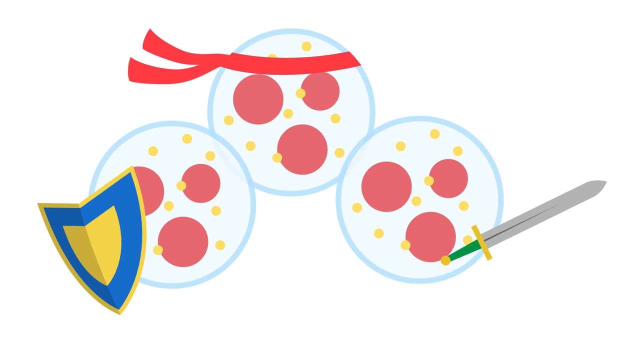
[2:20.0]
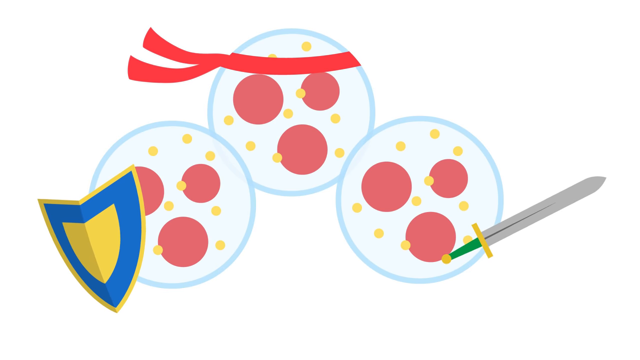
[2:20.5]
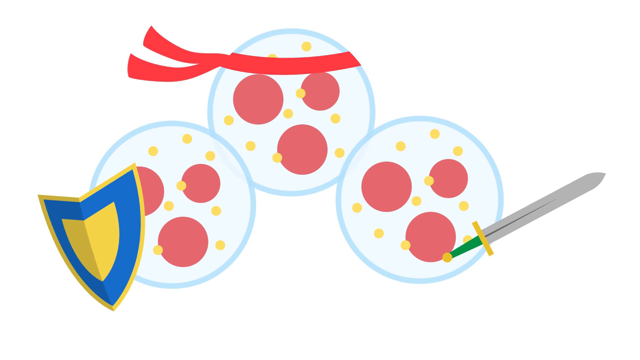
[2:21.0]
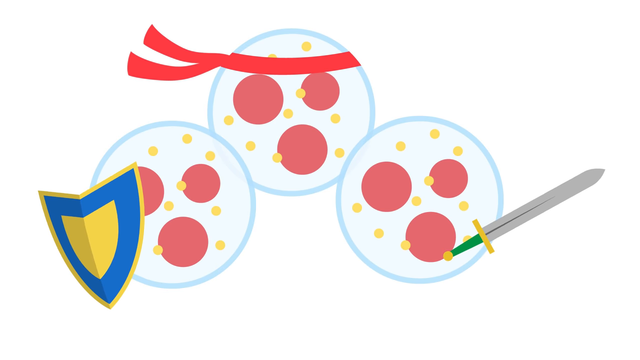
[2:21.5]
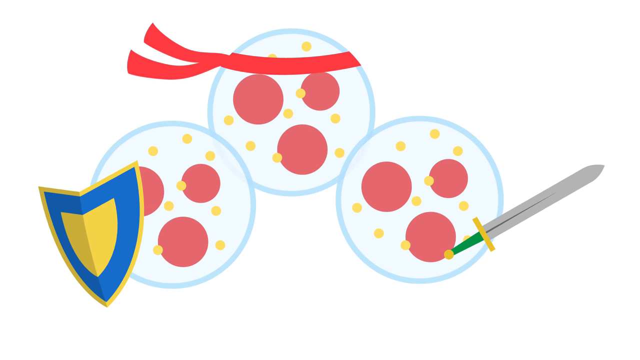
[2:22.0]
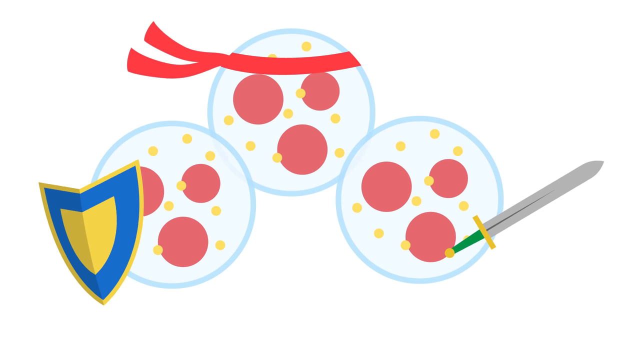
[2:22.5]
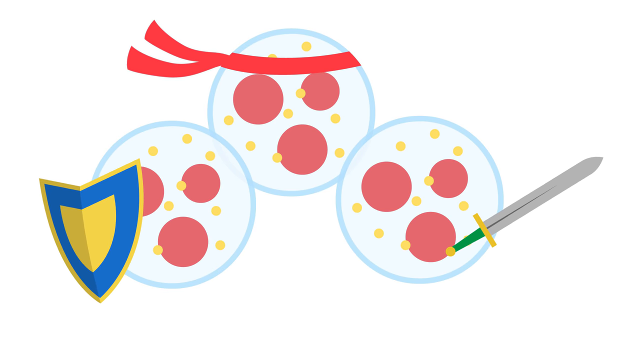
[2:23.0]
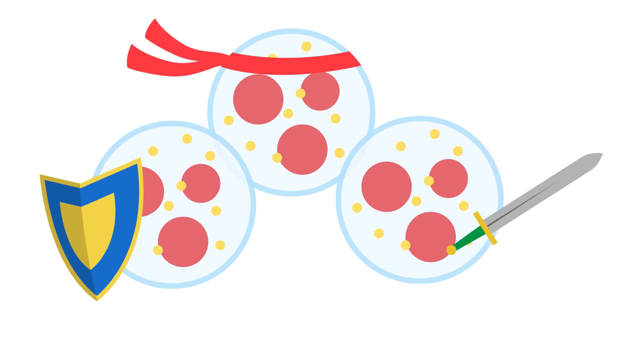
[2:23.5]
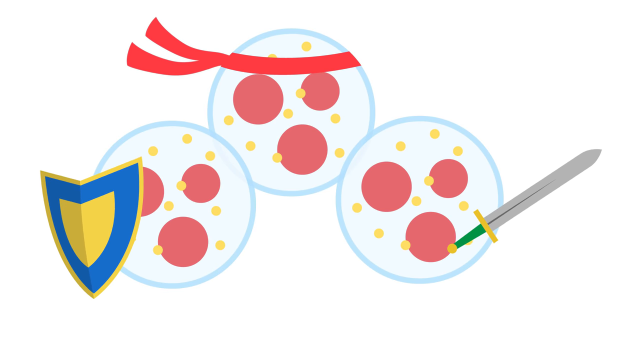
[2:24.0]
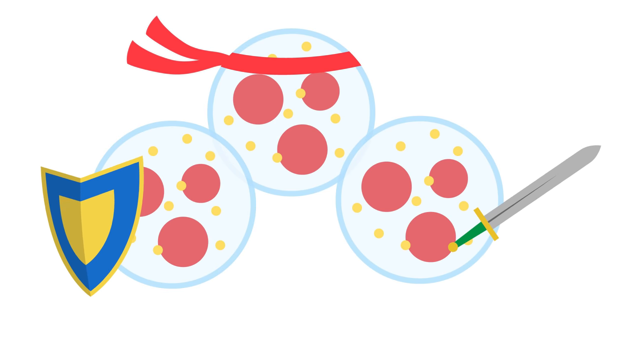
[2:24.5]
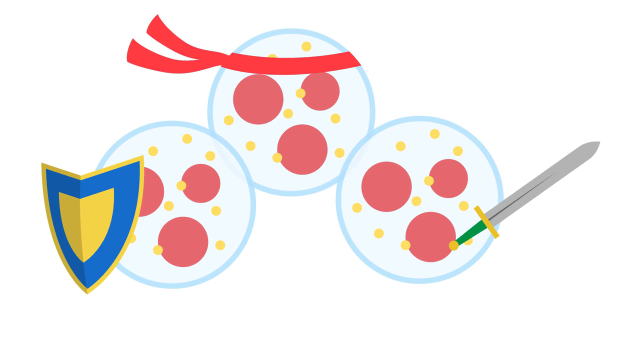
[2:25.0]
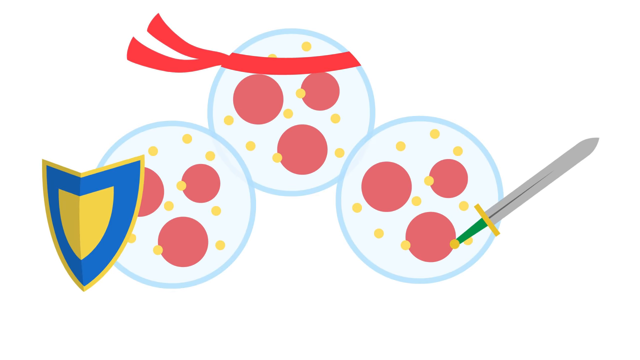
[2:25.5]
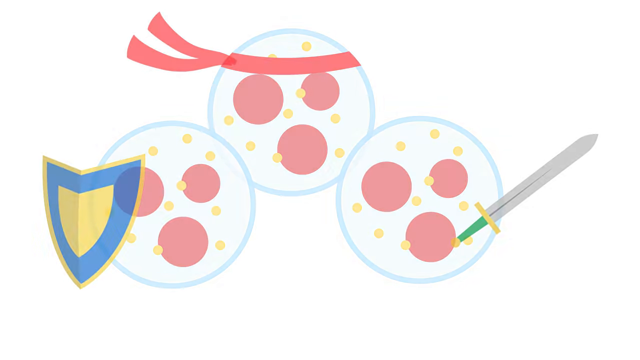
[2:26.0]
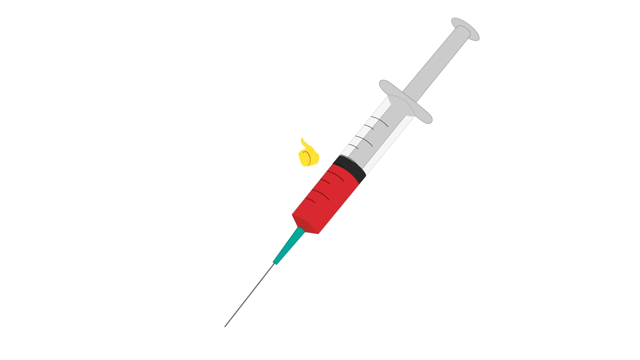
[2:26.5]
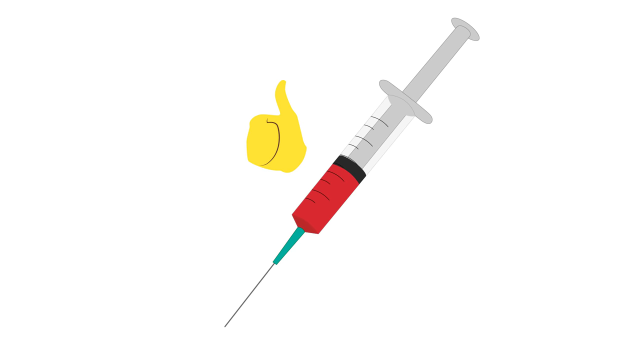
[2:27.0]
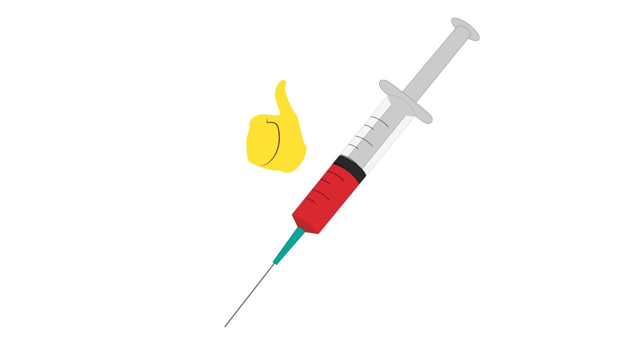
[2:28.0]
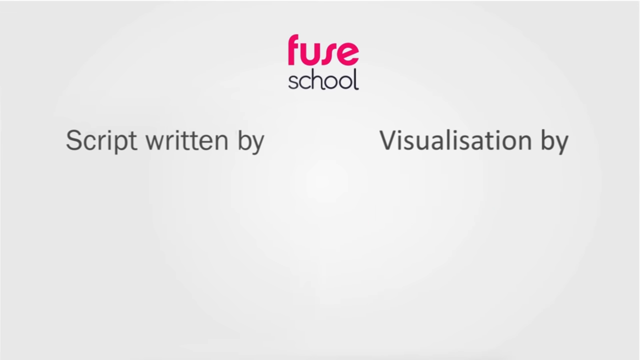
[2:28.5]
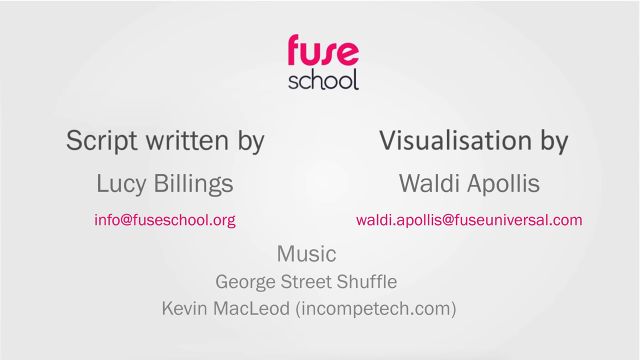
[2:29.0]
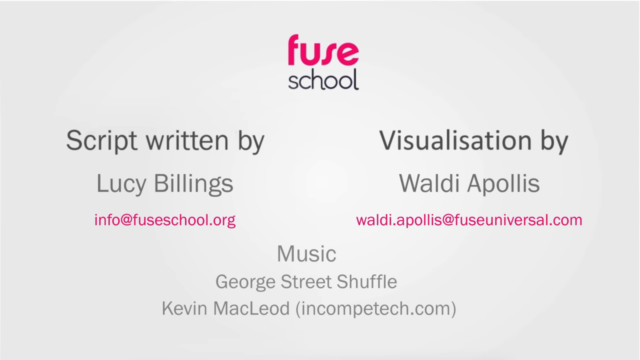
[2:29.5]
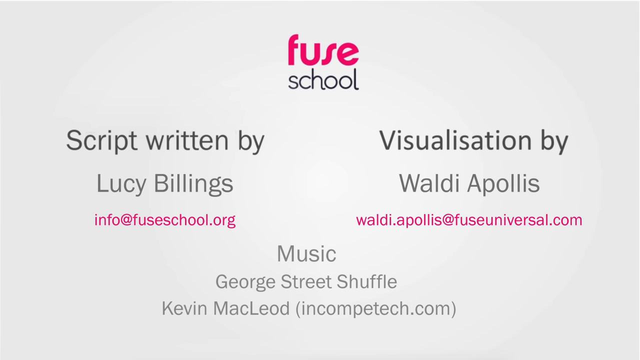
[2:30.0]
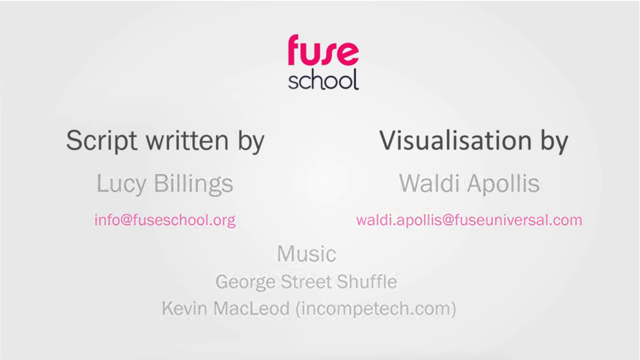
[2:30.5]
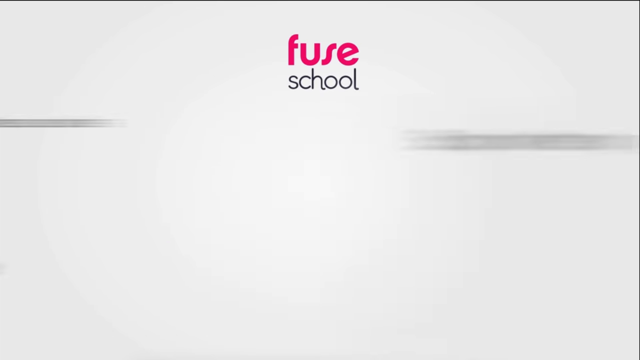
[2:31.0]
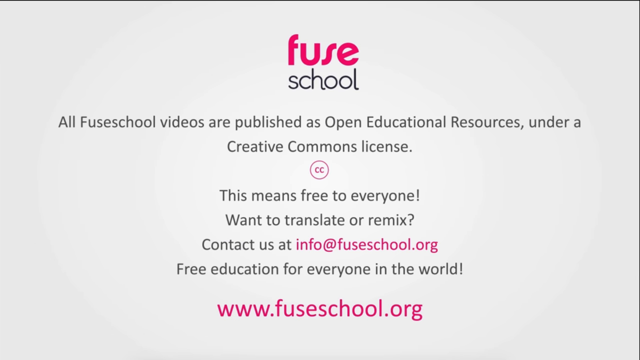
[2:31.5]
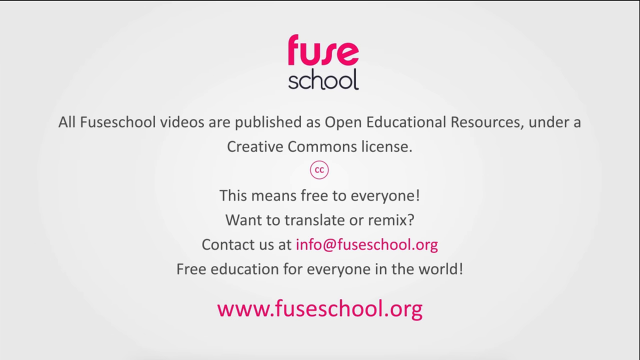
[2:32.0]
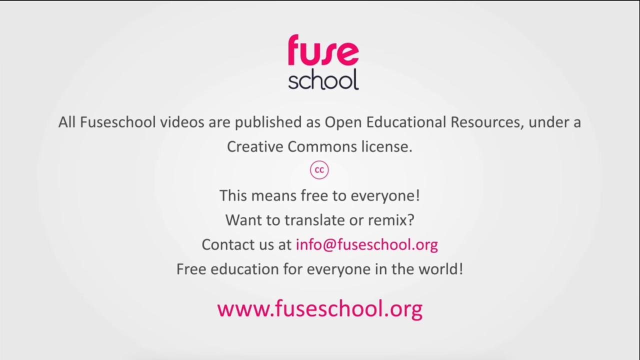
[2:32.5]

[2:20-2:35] Three circles each contain three red circles. A small yellow cross appears, then a sword, then a shield. The shield and sword move around what appear to be white parts, and then an injection for blood is shown. The video ends with the contact details of the people who created the video and made the visuals.